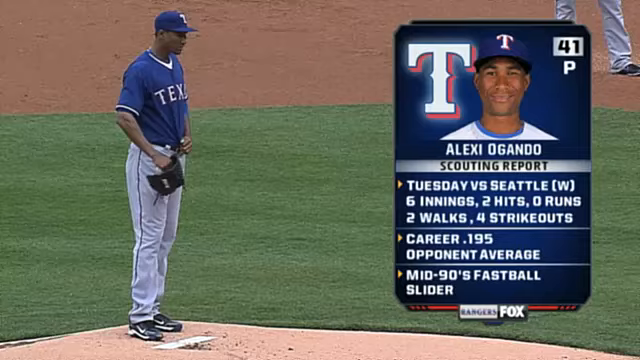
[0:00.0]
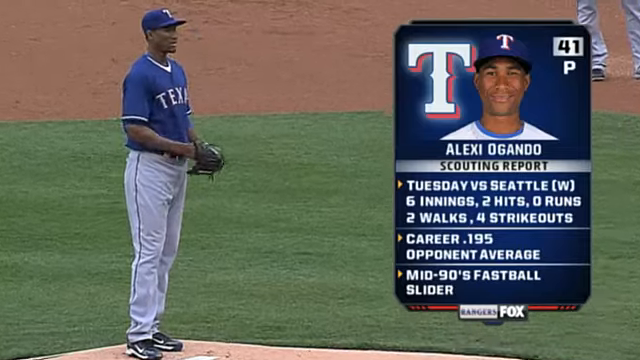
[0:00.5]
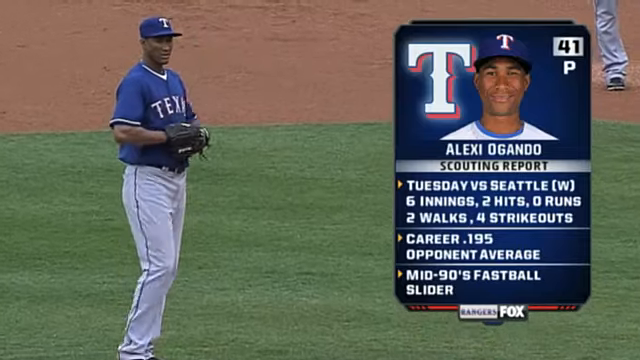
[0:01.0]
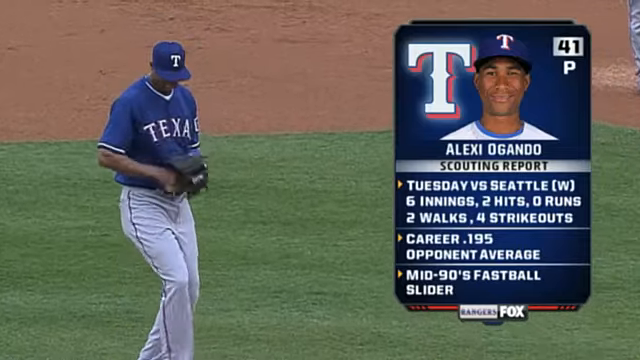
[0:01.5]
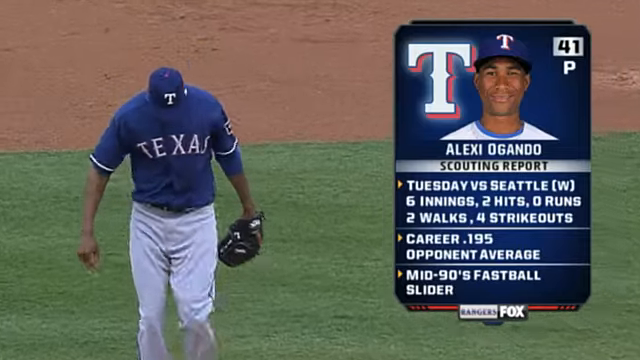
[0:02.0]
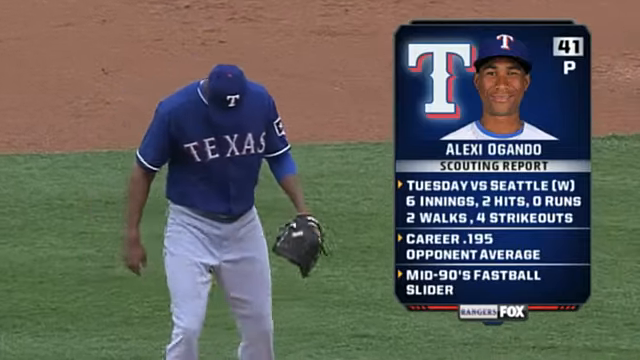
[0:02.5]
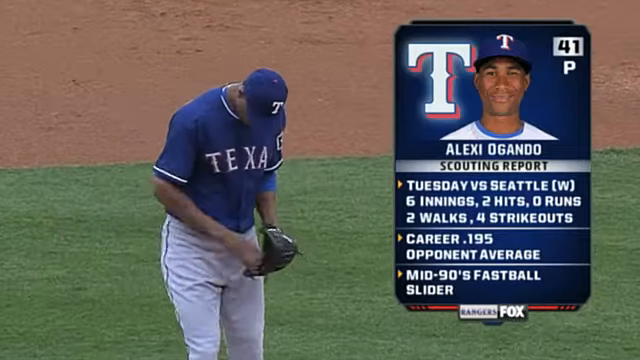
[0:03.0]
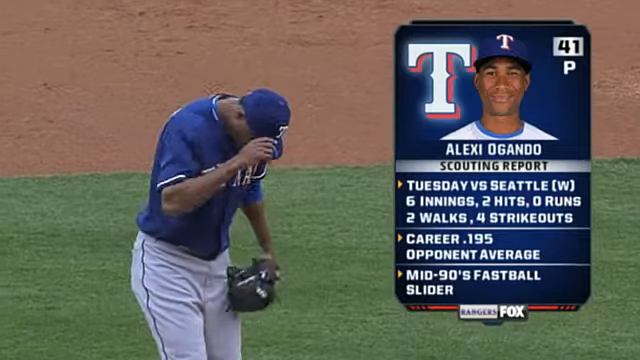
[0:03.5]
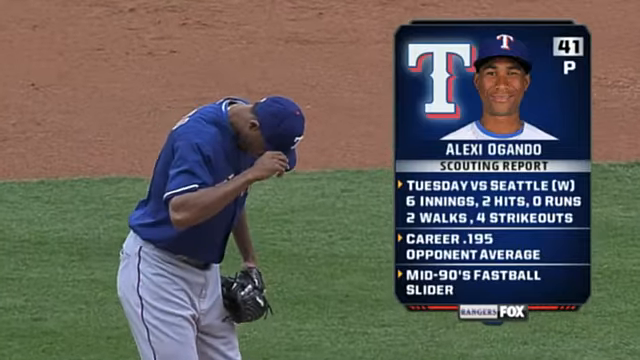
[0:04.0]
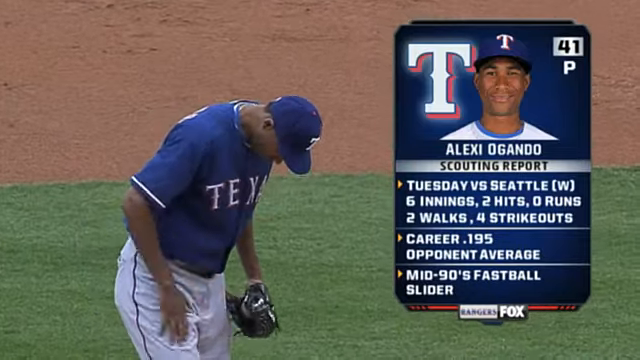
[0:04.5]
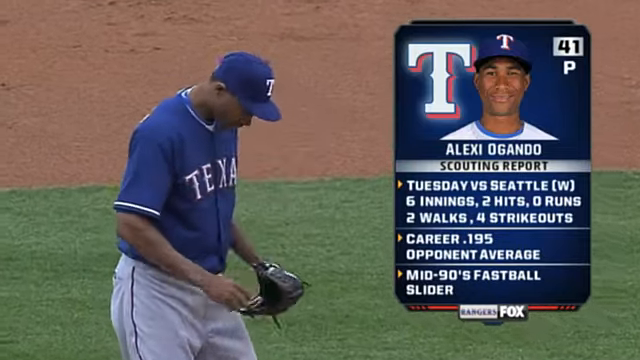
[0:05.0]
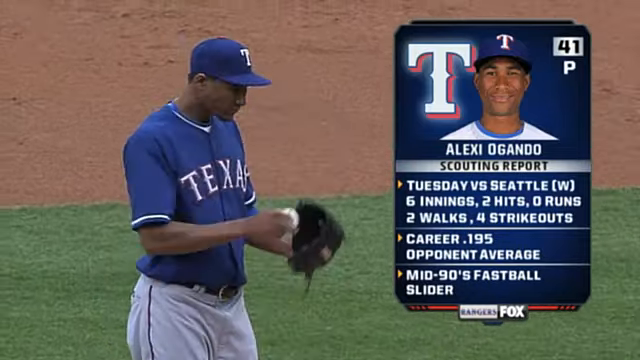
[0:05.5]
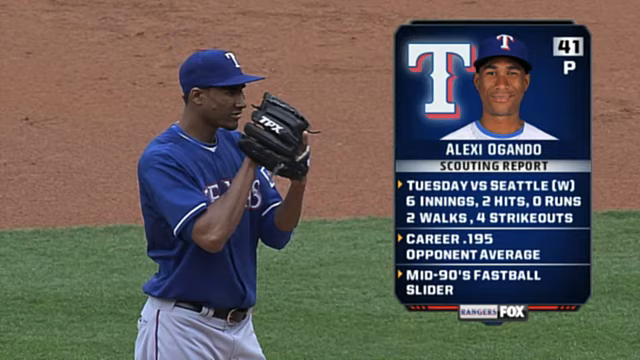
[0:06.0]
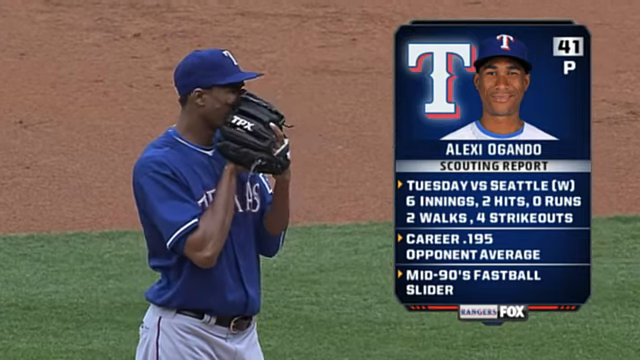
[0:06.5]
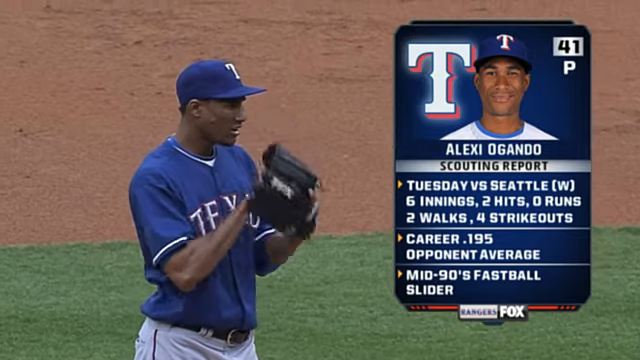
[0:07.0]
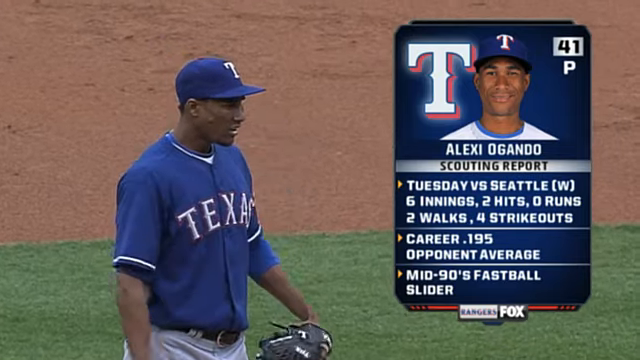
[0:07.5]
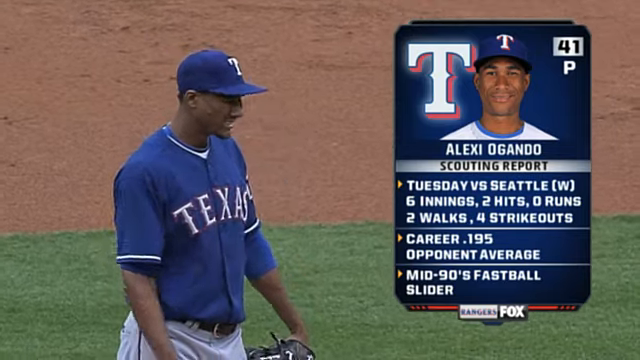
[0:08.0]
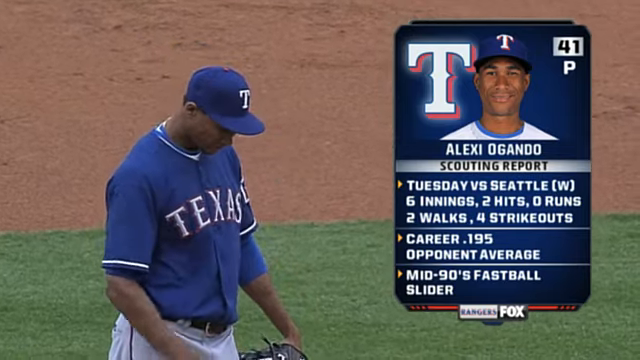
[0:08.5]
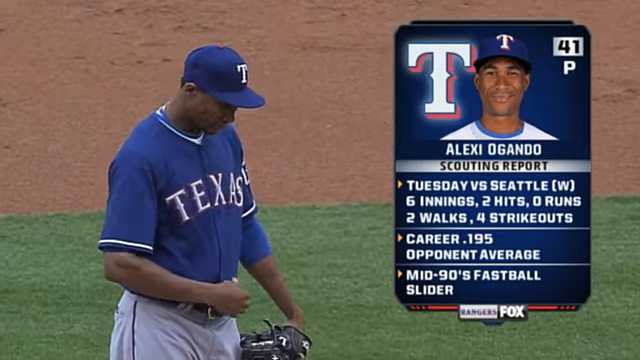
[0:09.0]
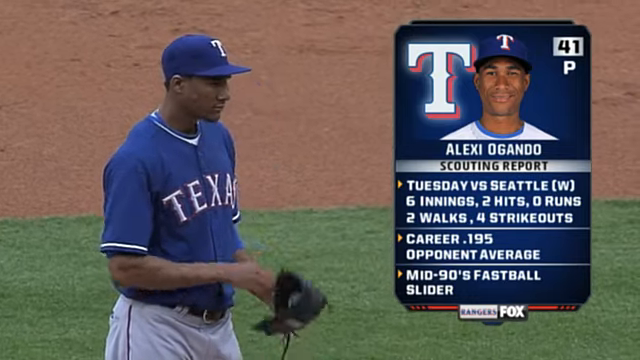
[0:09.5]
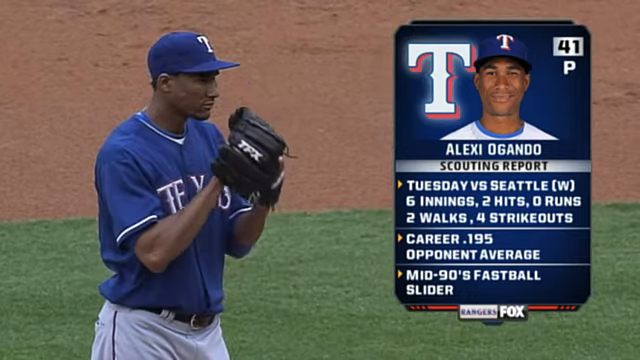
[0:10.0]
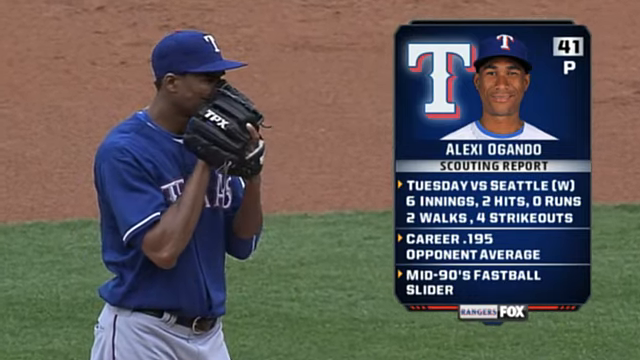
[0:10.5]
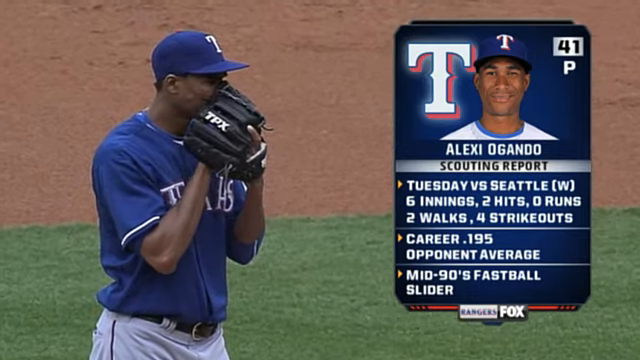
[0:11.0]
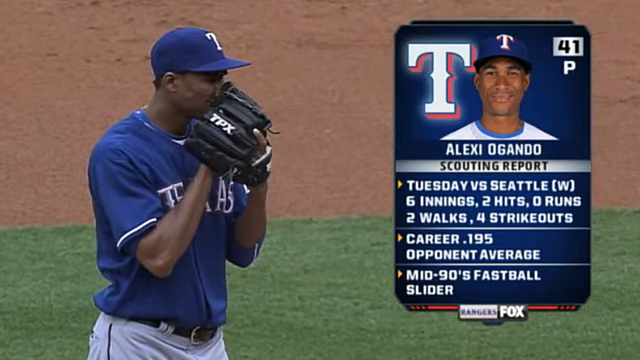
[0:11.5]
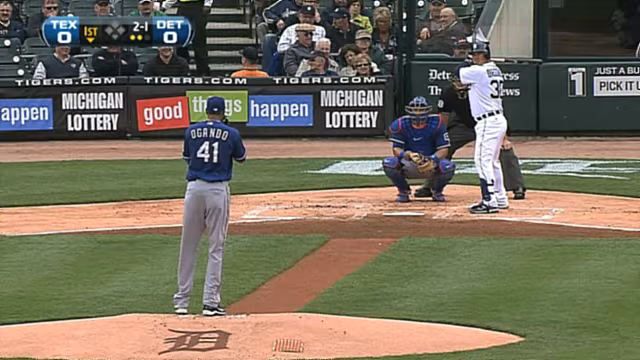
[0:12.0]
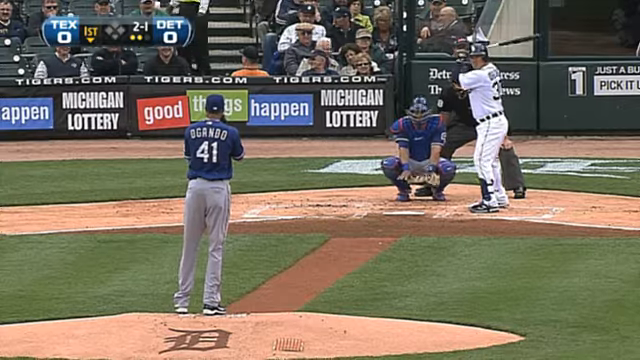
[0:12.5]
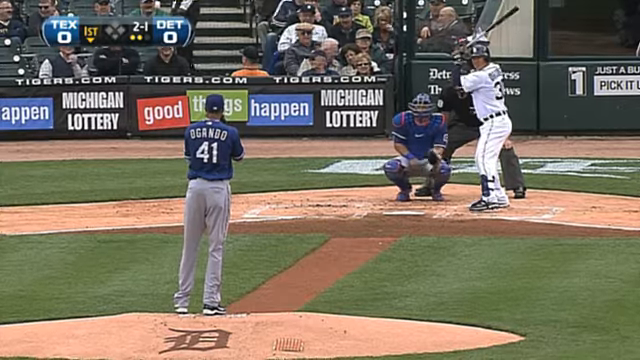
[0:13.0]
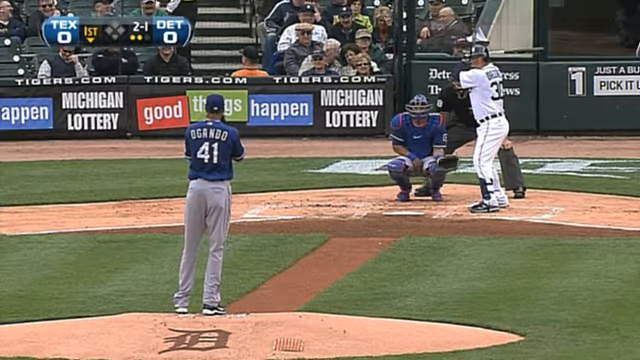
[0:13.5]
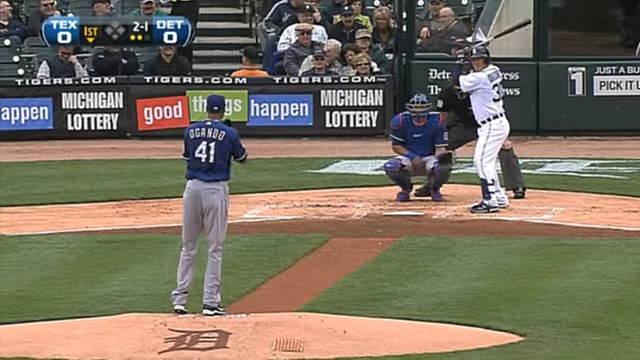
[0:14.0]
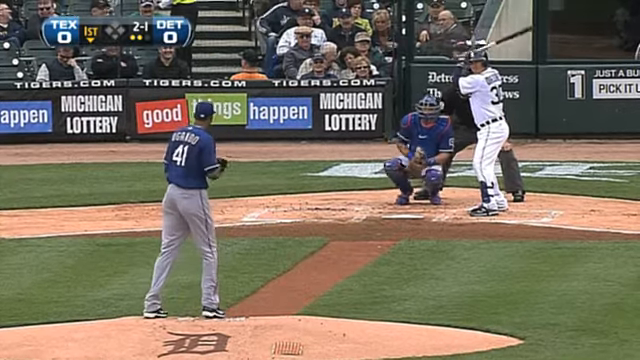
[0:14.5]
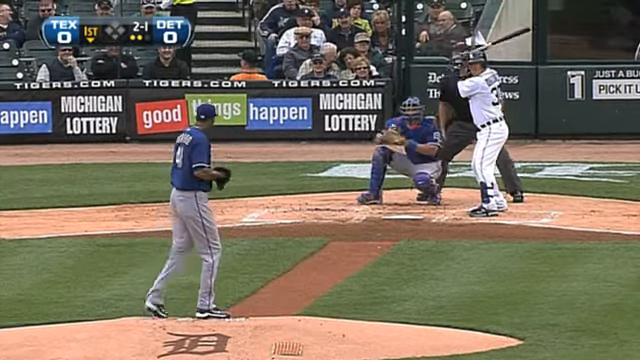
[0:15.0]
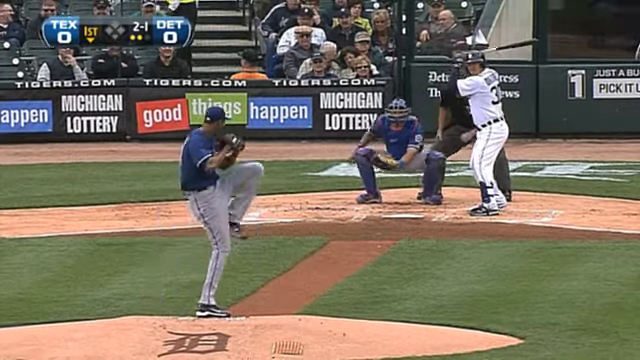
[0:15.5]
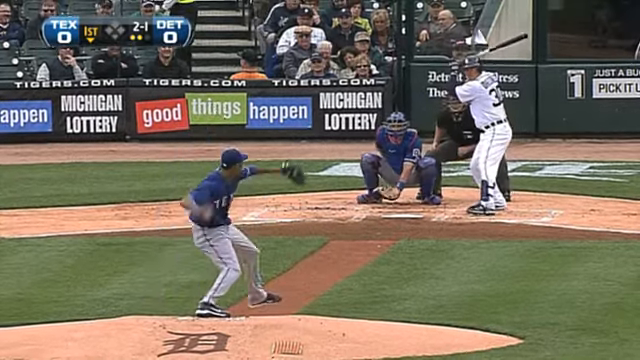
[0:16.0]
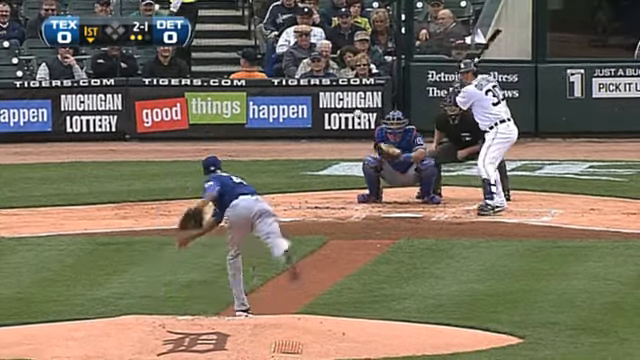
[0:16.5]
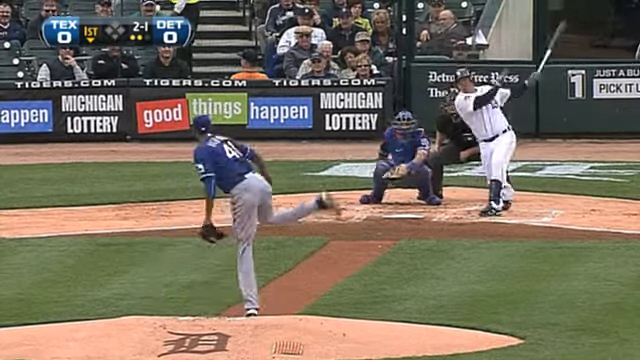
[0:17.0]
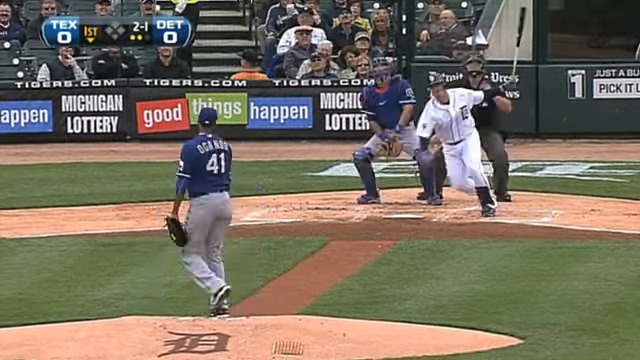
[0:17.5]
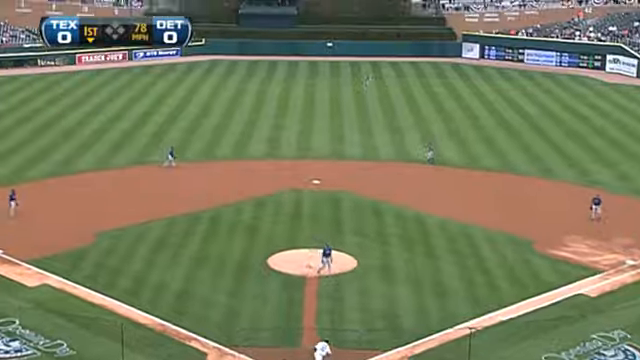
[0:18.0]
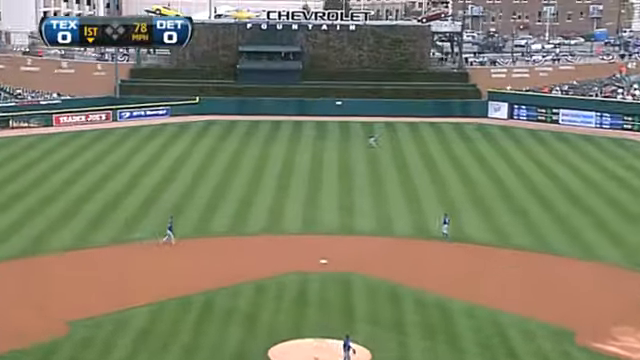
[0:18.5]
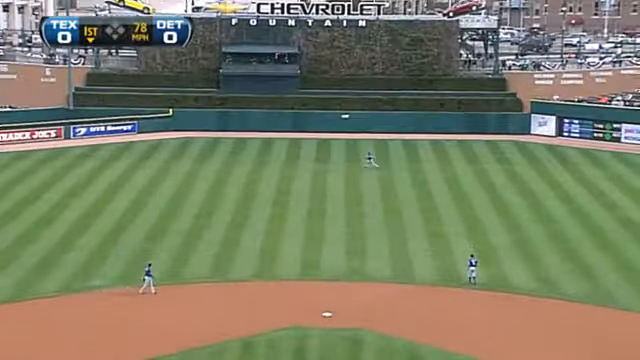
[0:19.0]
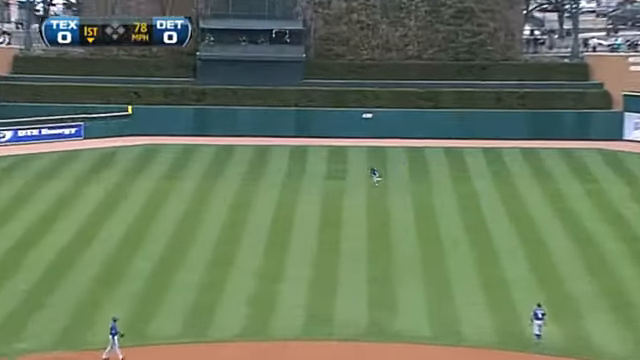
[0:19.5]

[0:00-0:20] The video begins with a baseball pitcher standing on the mound with his hand in the glove on his right hand, even though he is a right-hander. He is identified as Alex Ogando, a pitcher for the Texas Rangers. A scouting report on him appears on the right in white text on a blue background. The report gives his number as 41 for the Texas Rangers and states that on Tuesday versus Seattle he won the game, pitching six innings, allowing two hits and no runs, walking two and striking out four. It lists a career opponents' average against him of .195 and his key pitches as a fastball and slider in the mid-90s. On the mound he kicks the rubber, holds his glove and gets ready to pitch. The right-hander delivers to a batter who also bats right-handed. The ball is hit high to center field, but it is playable and seems about to be caught.